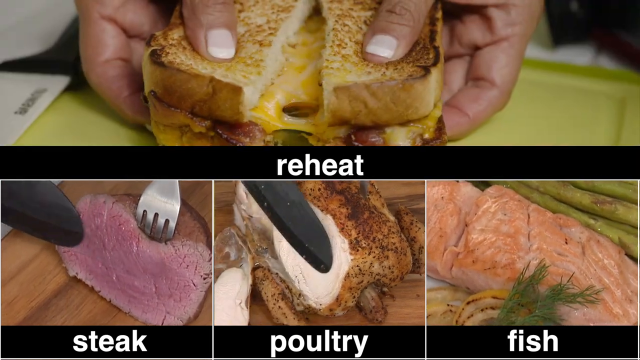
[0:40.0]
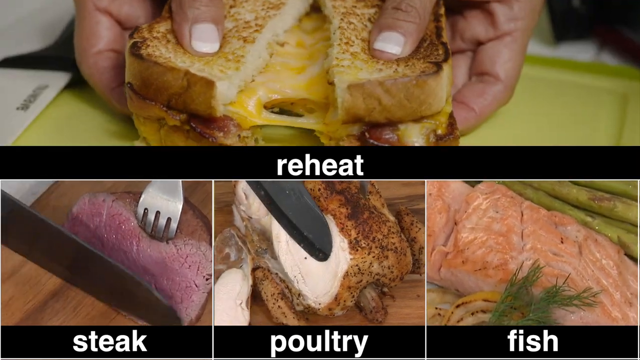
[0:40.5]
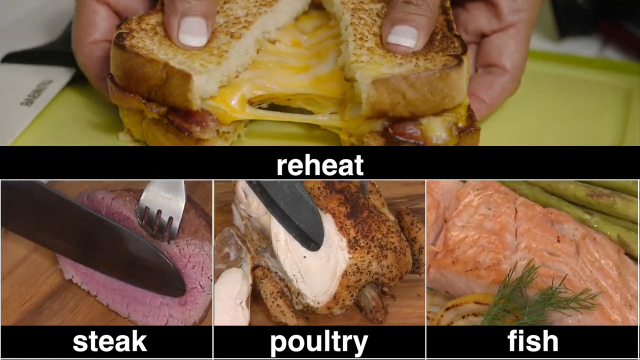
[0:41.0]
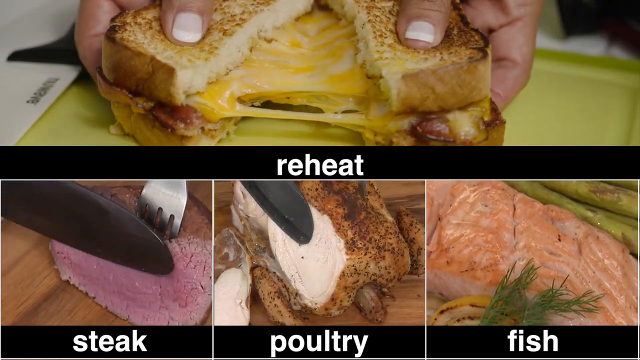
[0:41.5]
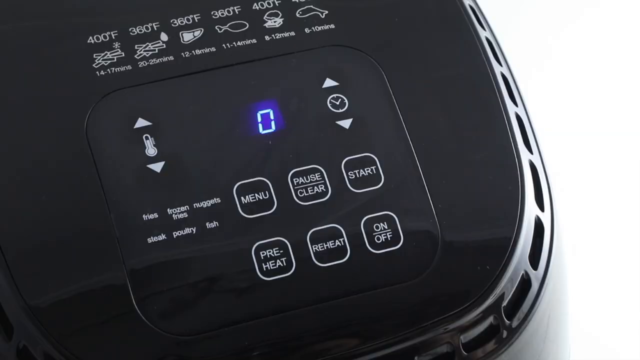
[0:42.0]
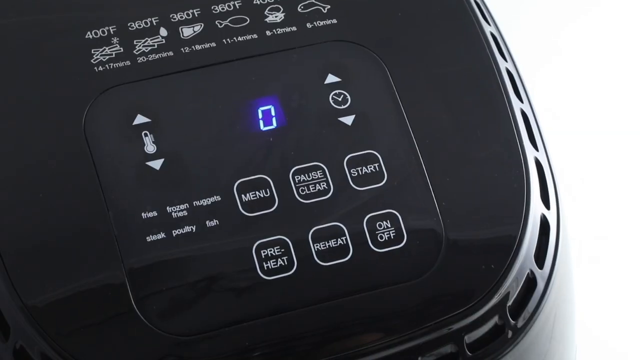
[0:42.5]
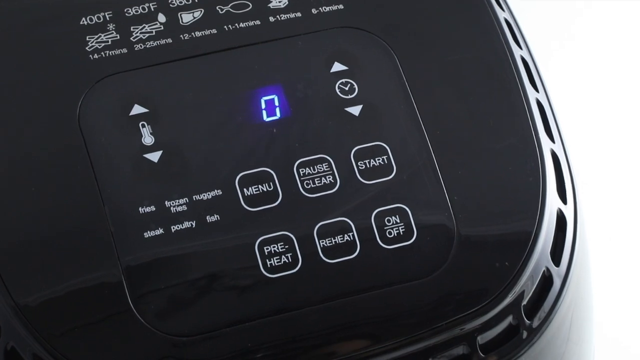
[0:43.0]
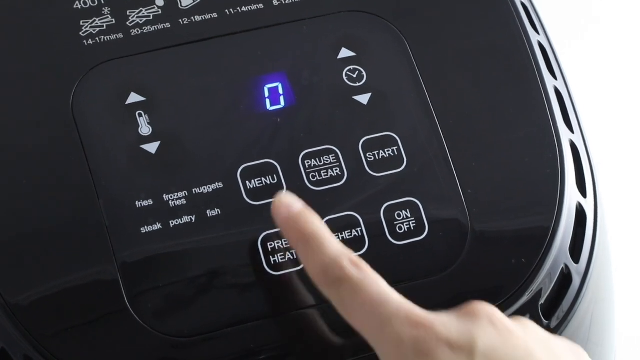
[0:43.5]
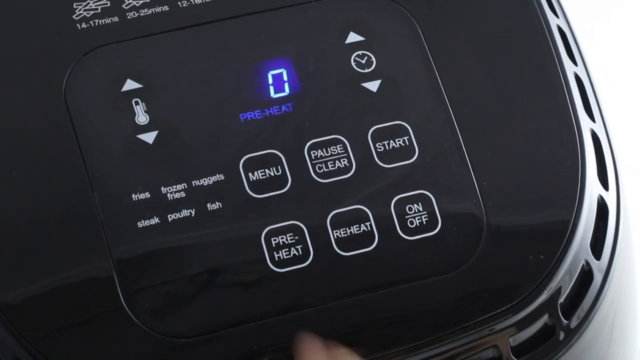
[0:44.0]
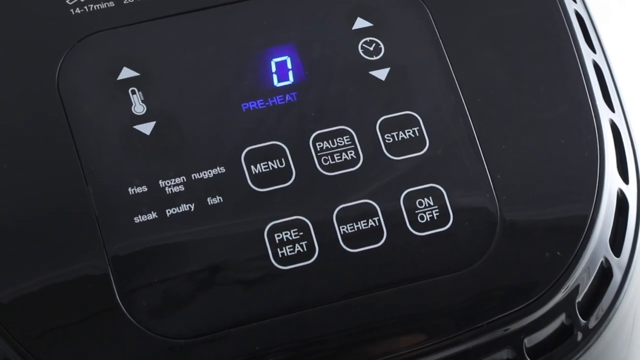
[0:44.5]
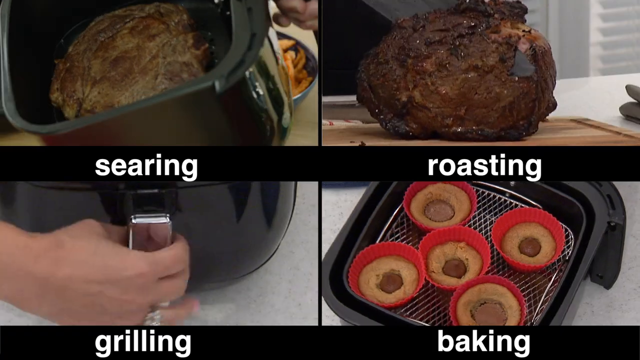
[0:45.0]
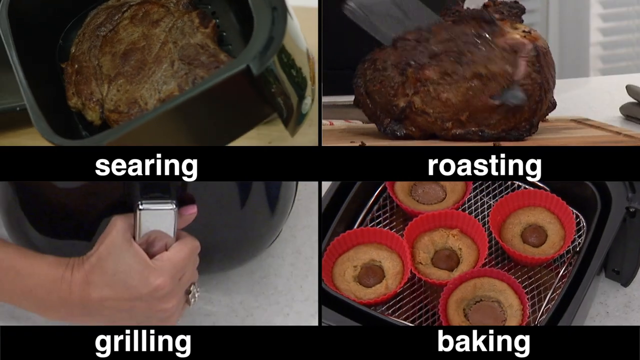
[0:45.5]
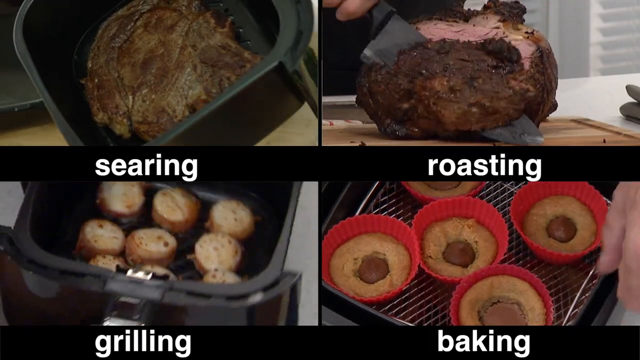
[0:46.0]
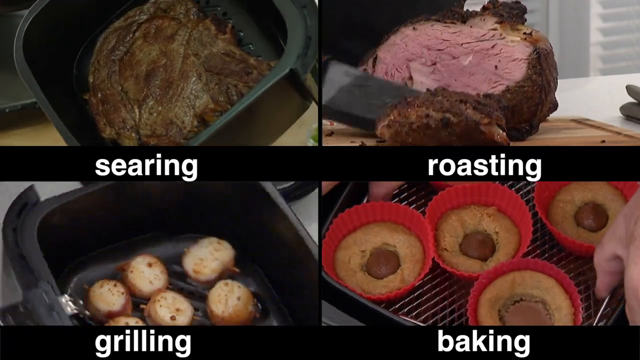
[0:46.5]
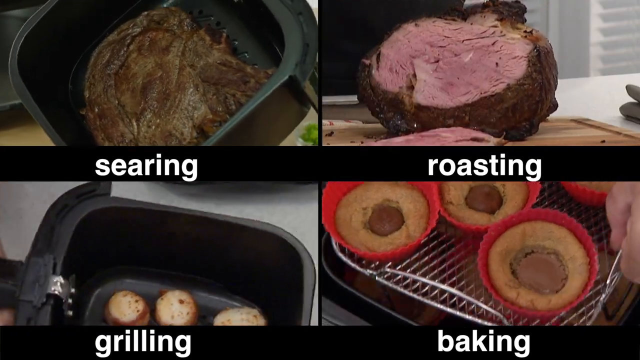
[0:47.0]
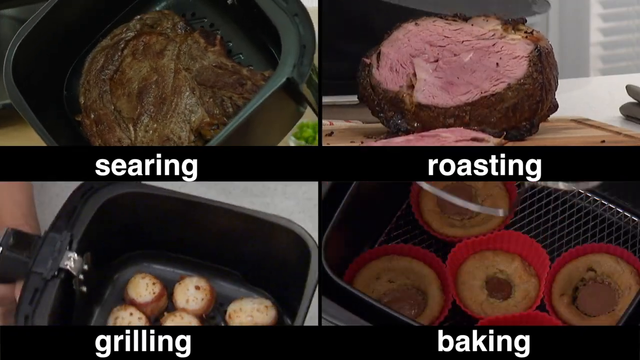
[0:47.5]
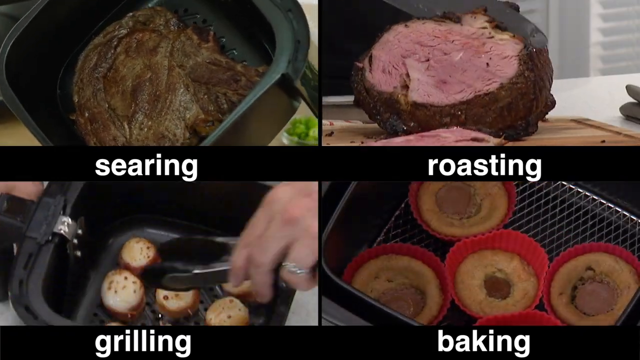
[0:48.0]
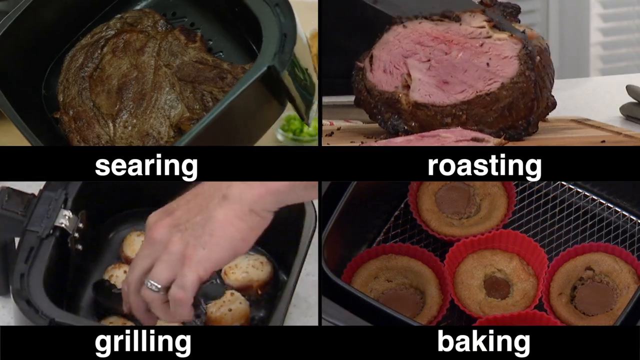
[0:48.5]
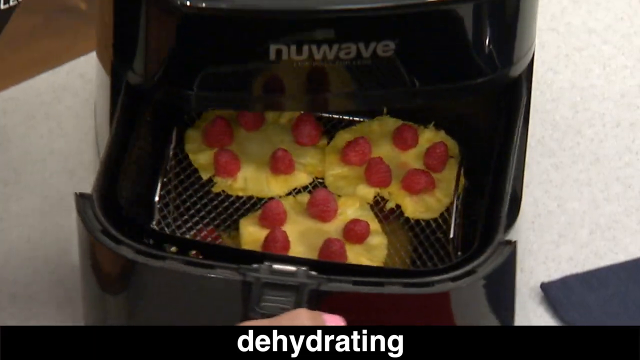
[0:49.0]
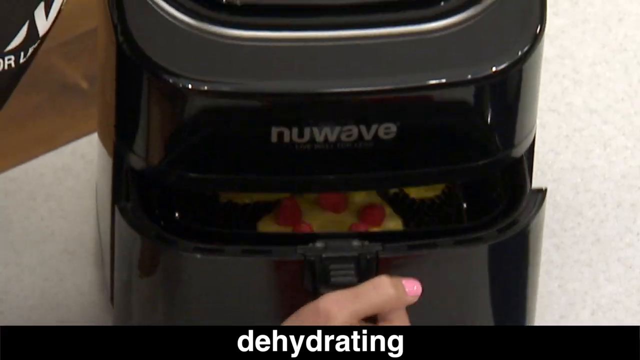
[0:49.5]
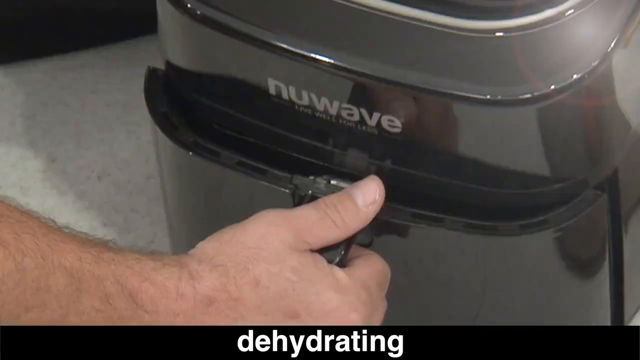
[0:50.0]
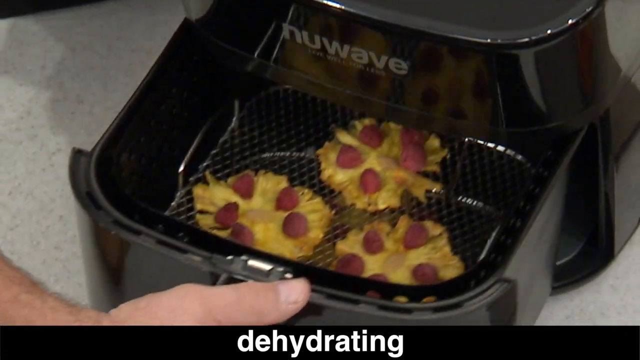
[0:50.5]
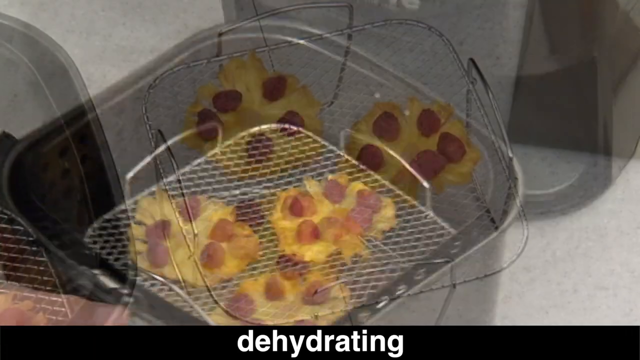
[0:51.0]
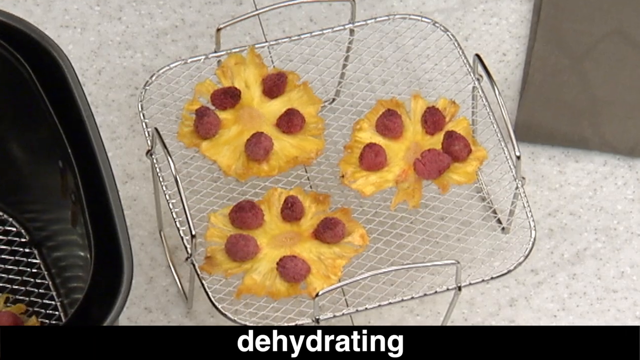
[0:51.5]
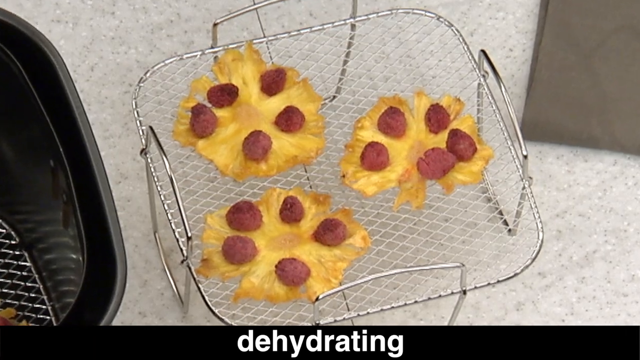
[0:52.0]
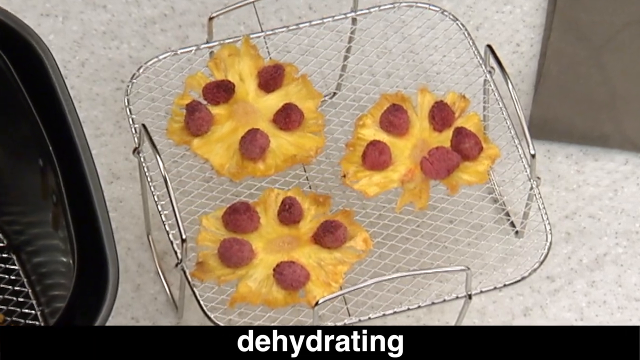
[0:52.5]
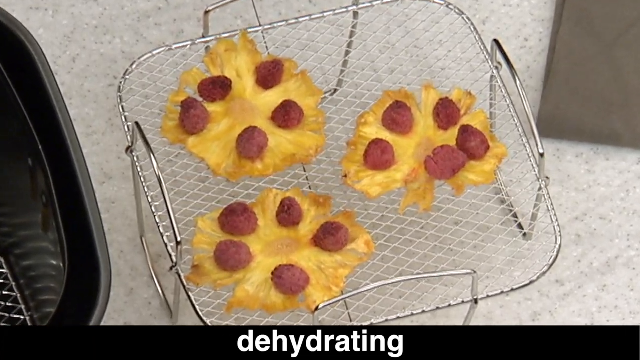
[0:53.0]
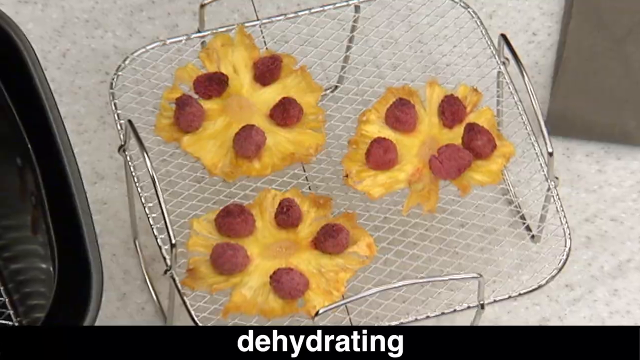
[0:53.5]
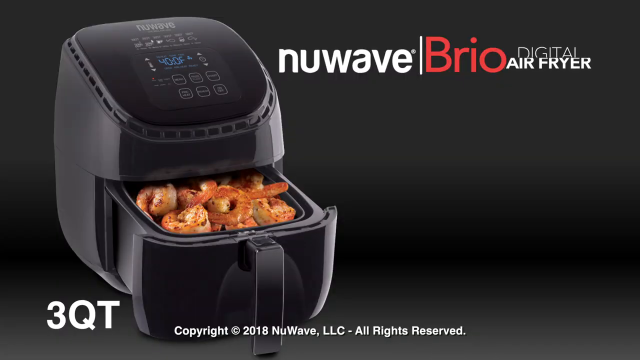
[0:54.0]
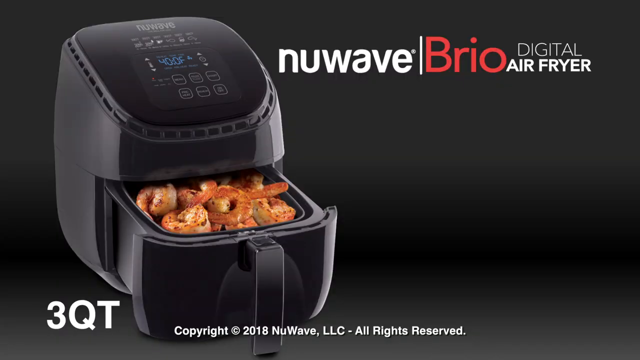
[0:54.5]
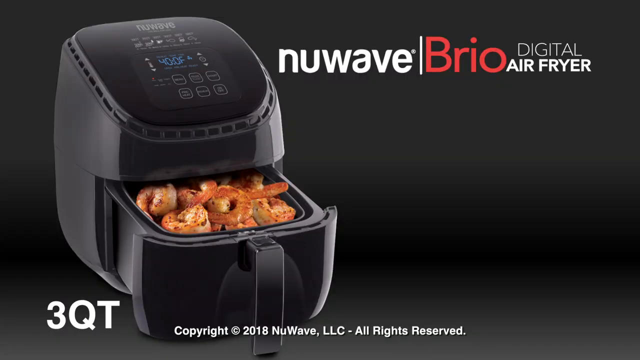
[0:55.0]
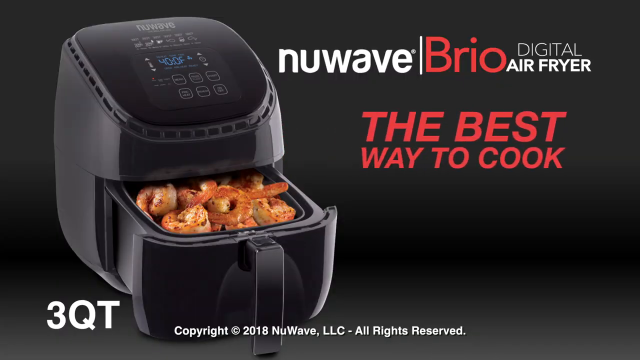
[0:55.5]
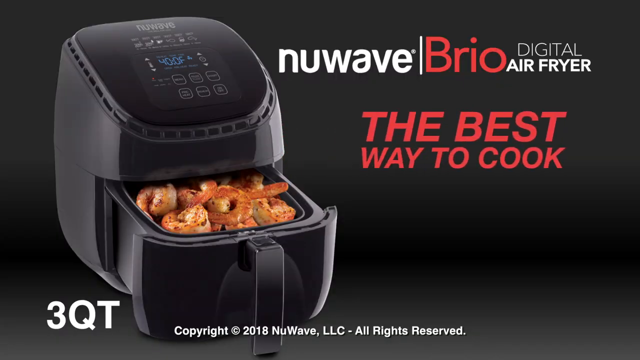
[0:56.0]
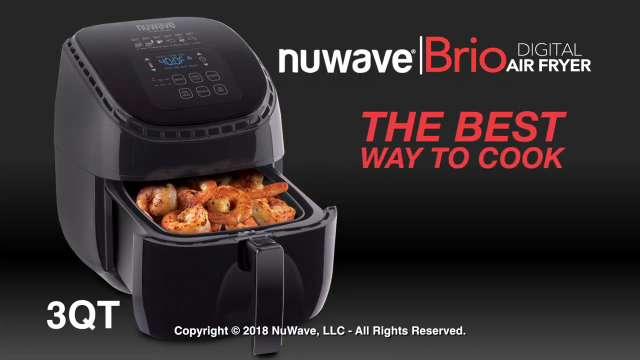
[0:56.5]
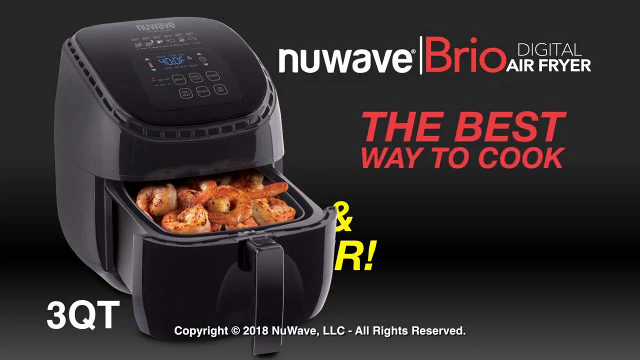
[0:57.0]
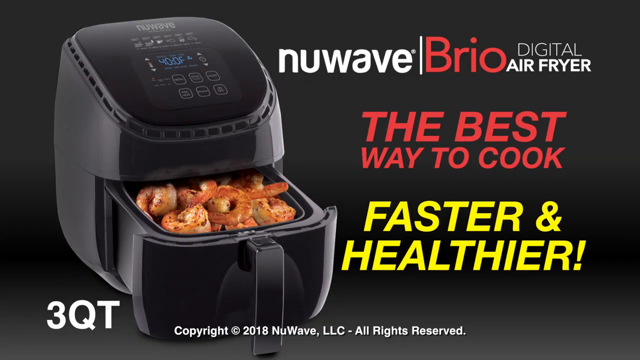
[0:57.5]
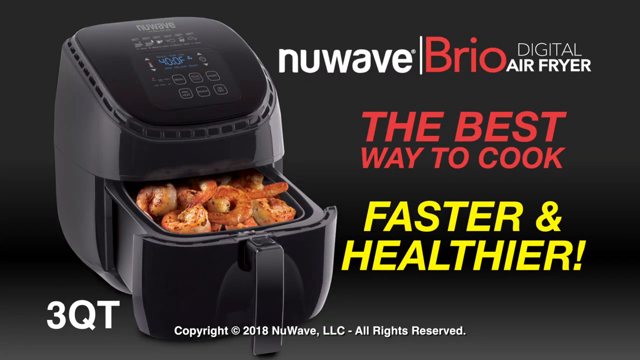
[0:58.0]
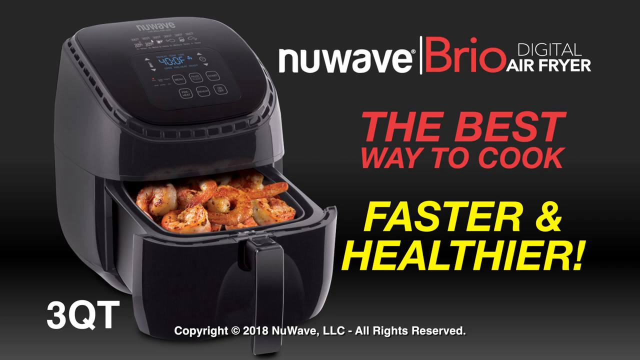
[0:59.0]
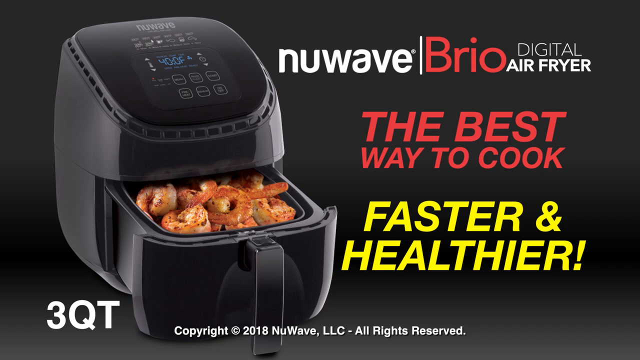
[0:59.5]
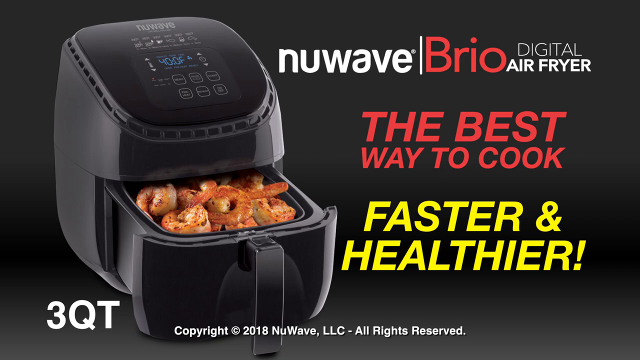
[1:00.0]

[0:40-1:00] A rectangular box occupies the top quarter of the screen and stays in the middle. A hand with well-manicured thumbs facing the viewer and four fingers underneath holds two slices of toasted bread between thumb and fingers, with cheese in the middle. The view goes to the three boxes at the bottom: a picture of meat that is pink inside with a fork holding it; in the middle, a knife cutting into a white piece of meat that is tan on the outside; and at the bottom right, the fish fillet. Back at the top are the options reheat, pause and clear. The next screen is about searing and roasting, with four equally divided boxes: the top left shows a brown piece of meat; the top right shows a brown object that is pink in the middle; the bottom left, for searing, shows three round objects; and the bottom right shows red silicone resting on a wire, four of them. A hand holds the inside of the basket and moves the objects out of the roaster. Cooked items sit on the counter. The message is that it is the best way to cook faster and healthy.